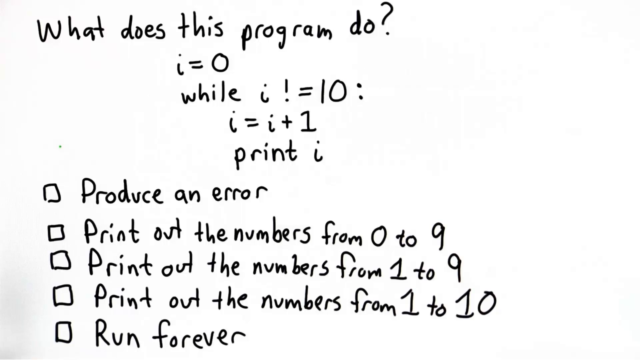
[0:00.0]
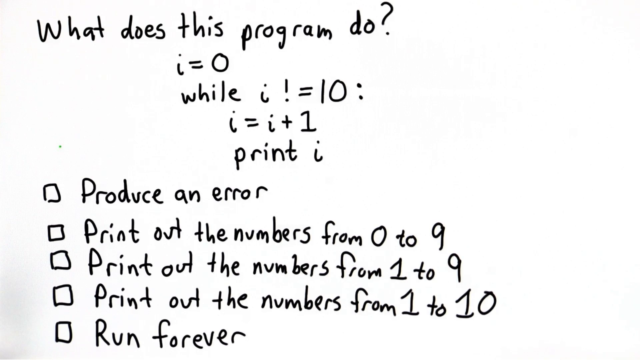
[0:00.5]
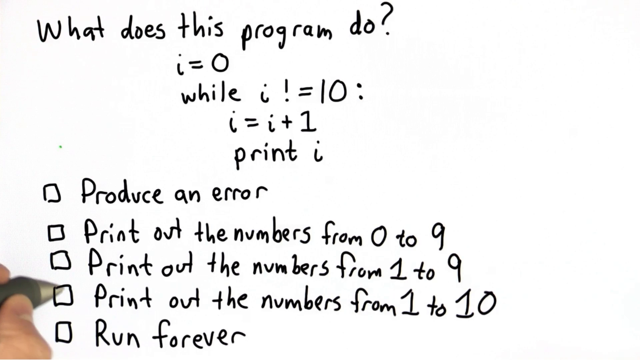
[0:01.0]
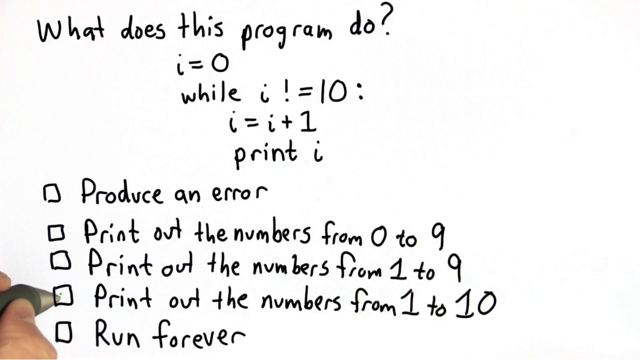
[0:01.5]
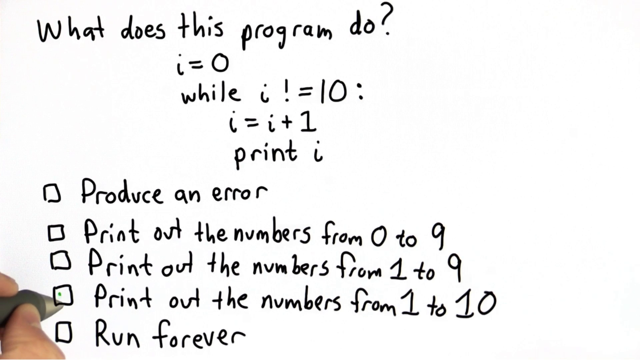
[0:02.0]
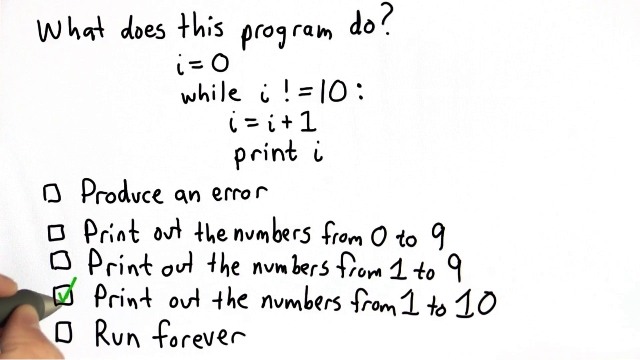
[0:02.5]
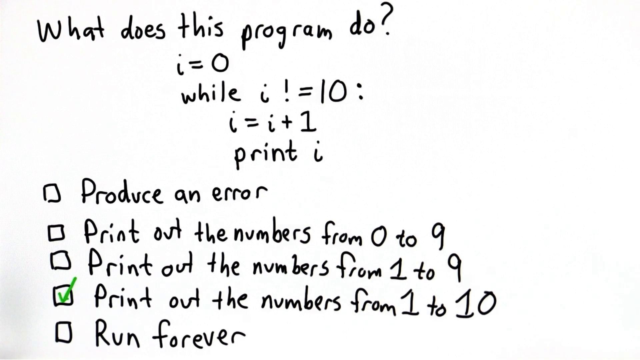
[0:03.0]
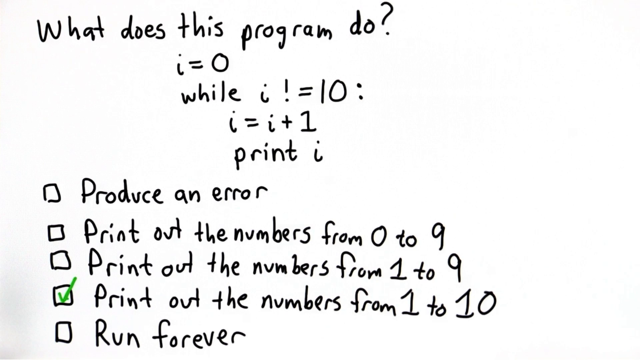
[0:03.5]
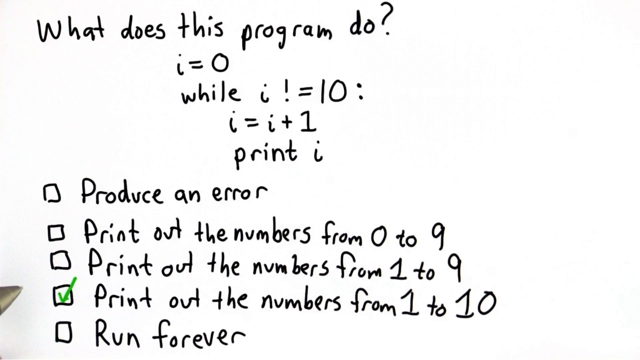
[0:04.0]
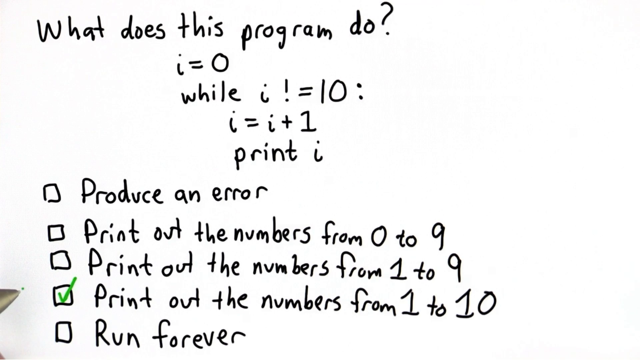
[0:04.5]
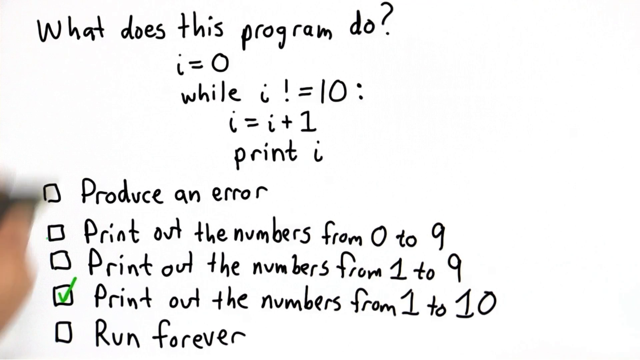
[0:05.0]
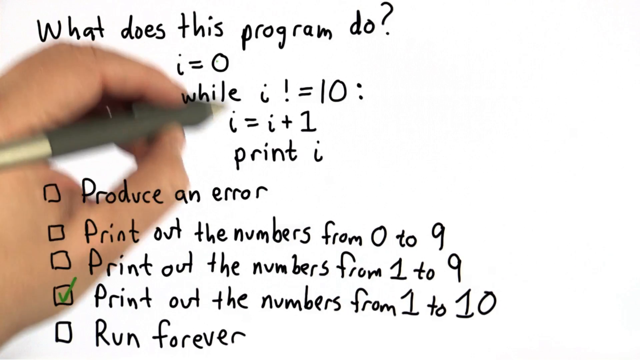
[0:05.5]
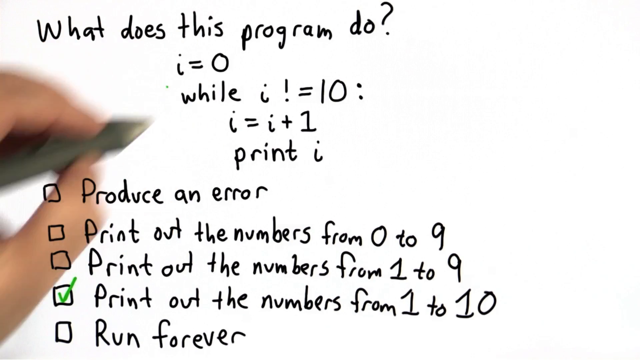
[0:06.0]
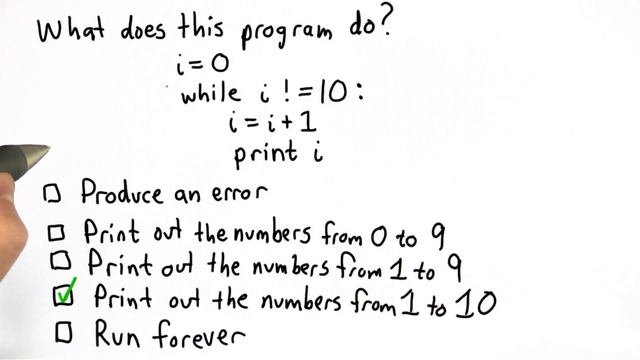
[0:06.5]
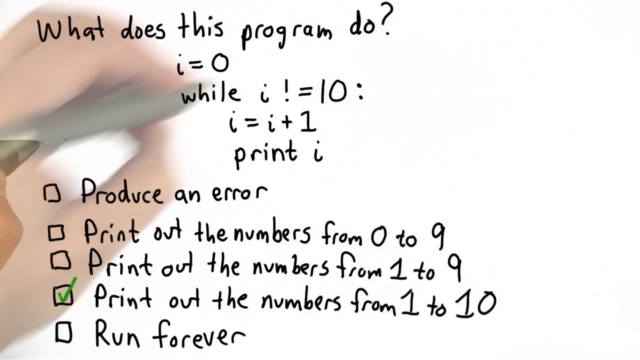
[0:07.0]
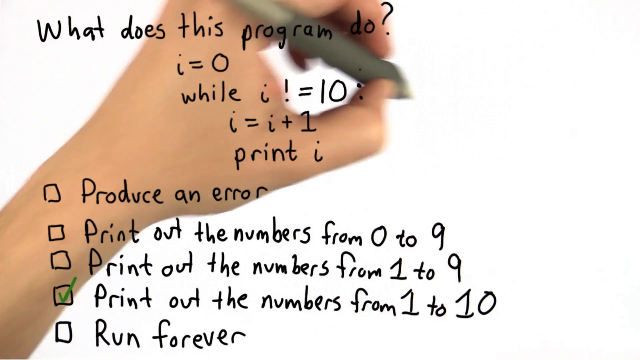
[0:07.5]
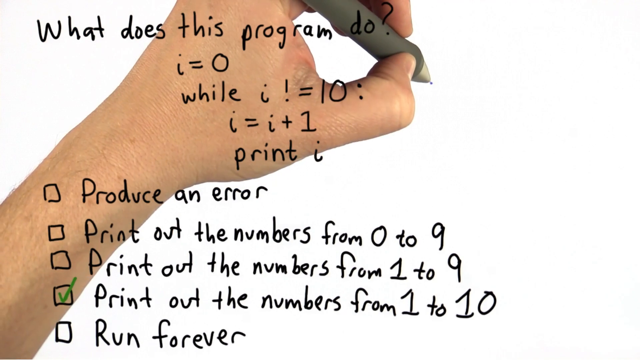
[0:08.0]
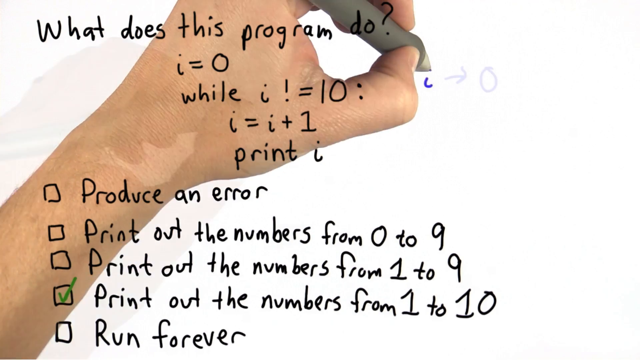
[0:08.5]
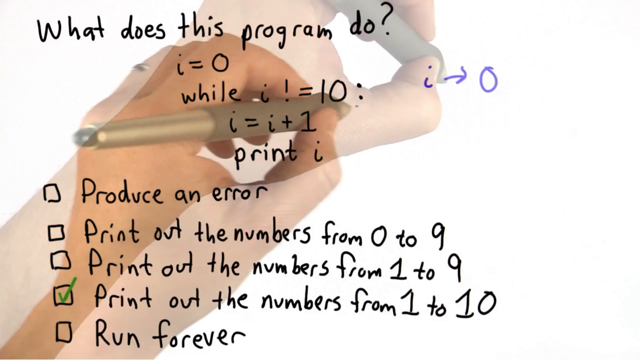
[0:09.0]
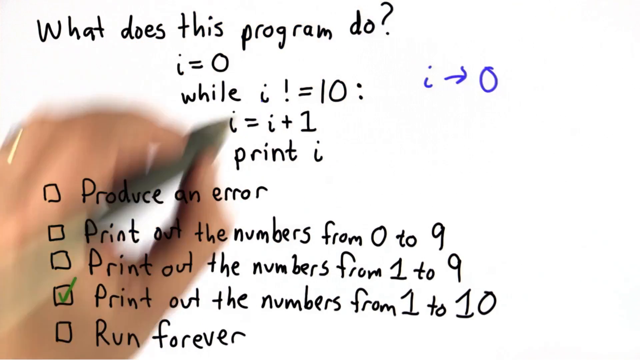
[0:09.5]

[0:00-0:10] A white page shows a handwritten problem. The title reads "what does this program do?" followed by "i = 0 while i != 10: i = i + 1 print i". Handwritten boxes run down the left-hand side of the screen: box one says "produce an error", box two "print out the numbers from 0 to 9", box three "print out the numbers from 1 to 9", box four "print out the numbers from 1 to 10", and box five "run forever". A pen and someone's fingers appear in the bottom left-hand corner, and the pen ticks the fourth box down, "print out the numbers from 1 to 10", in green as the answer. The pen hovers over the page, then in the top right-hand corner writes an i in blue followed by a blue arrow. The pen puts a green dot on the right side of the page, two thirds of the way up.